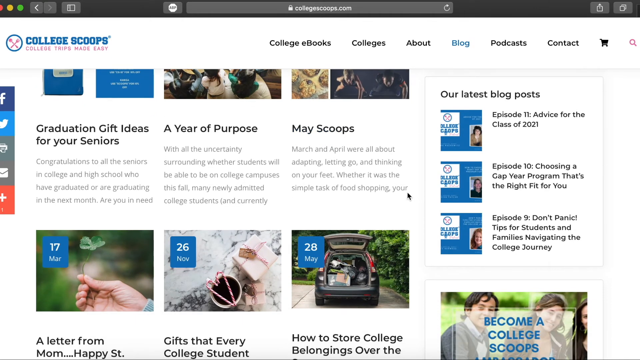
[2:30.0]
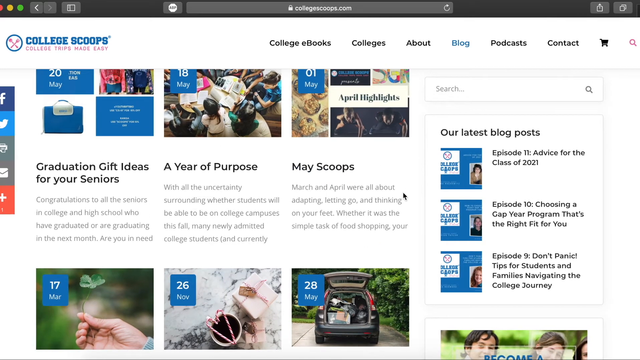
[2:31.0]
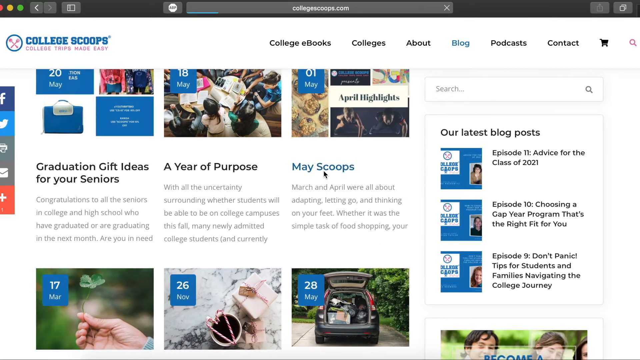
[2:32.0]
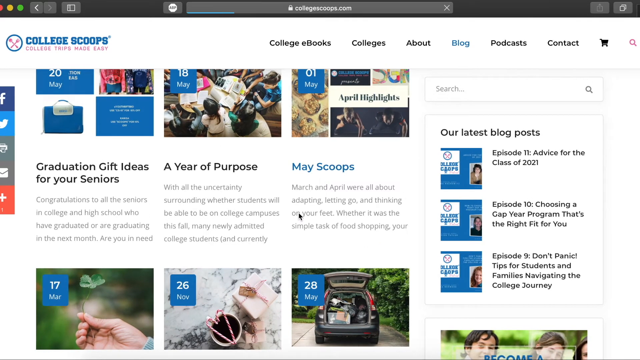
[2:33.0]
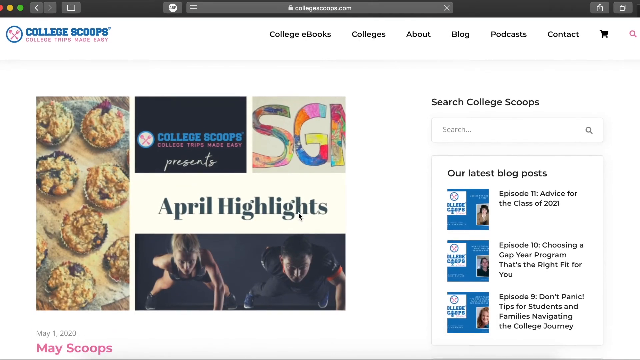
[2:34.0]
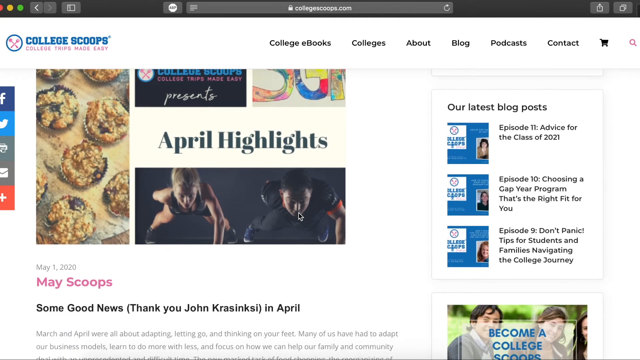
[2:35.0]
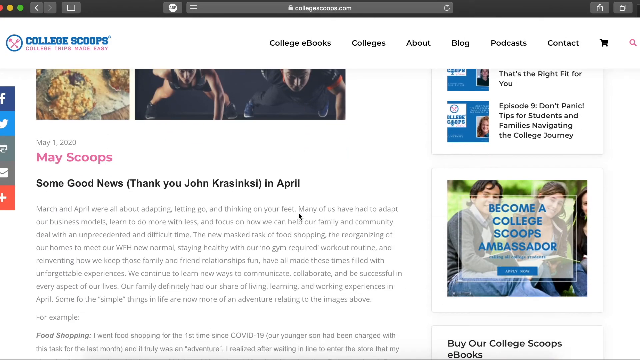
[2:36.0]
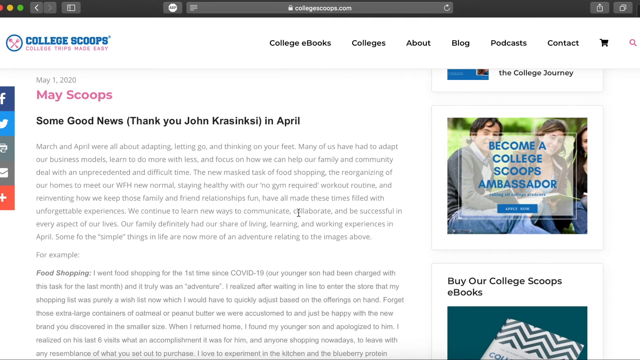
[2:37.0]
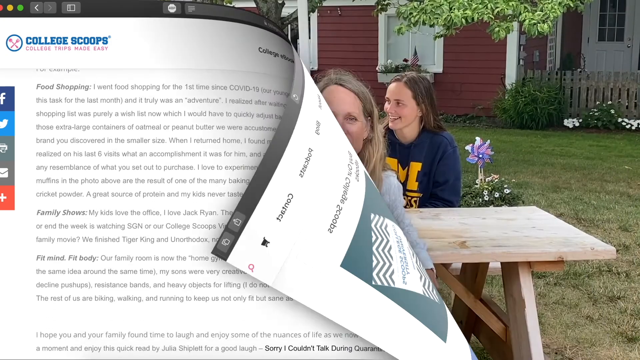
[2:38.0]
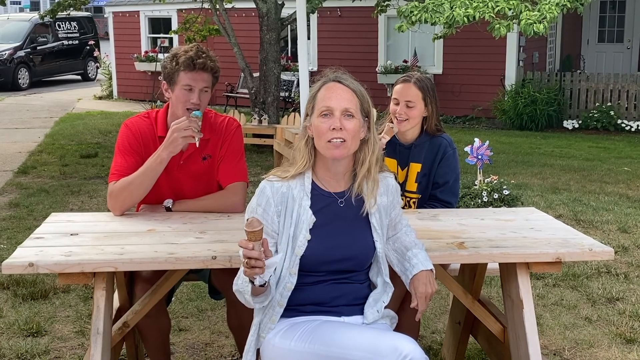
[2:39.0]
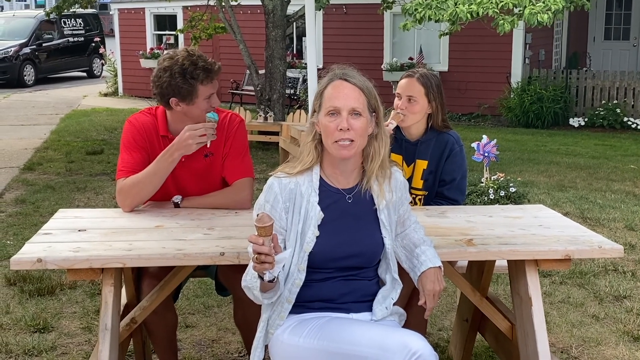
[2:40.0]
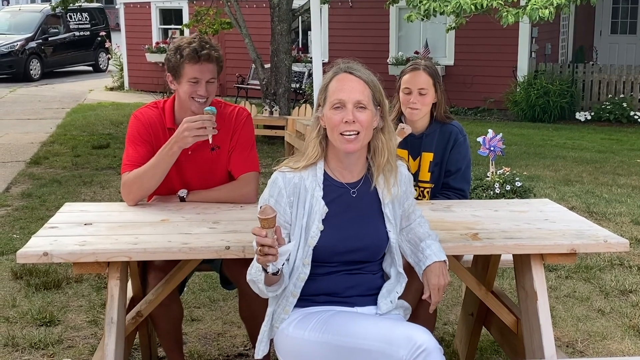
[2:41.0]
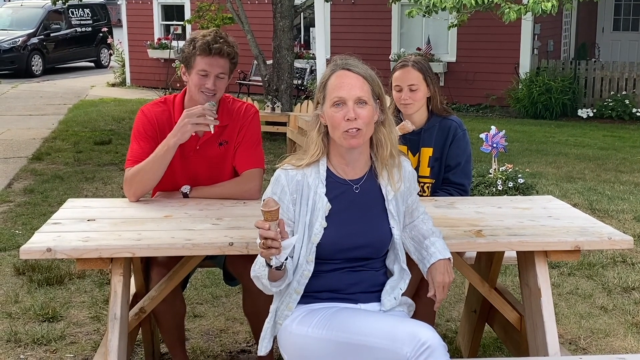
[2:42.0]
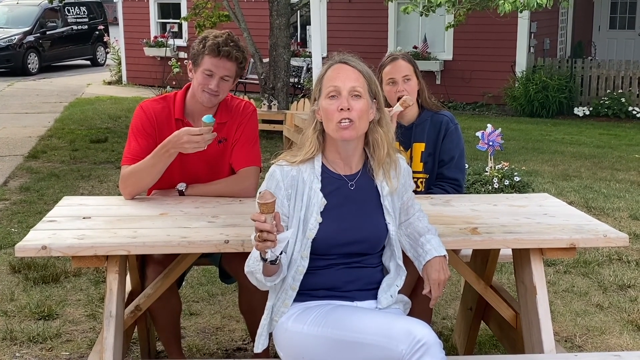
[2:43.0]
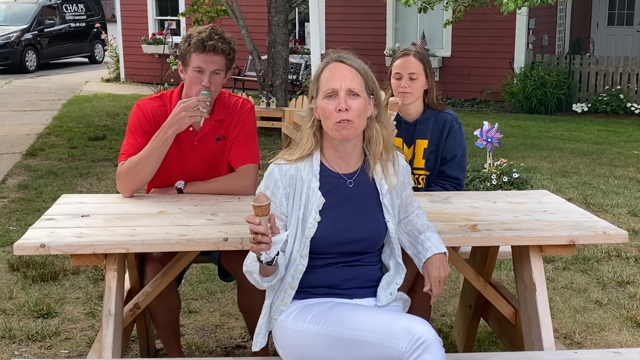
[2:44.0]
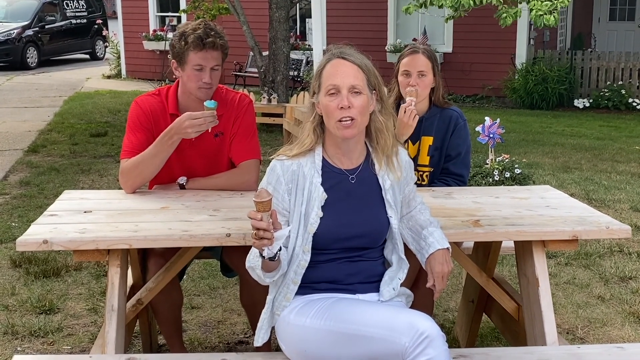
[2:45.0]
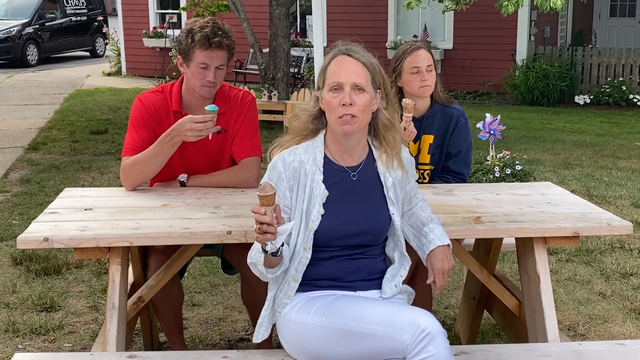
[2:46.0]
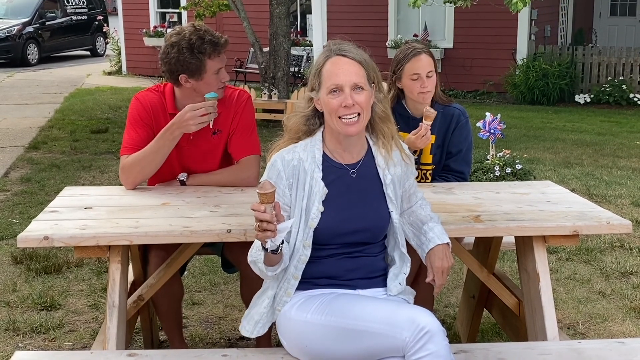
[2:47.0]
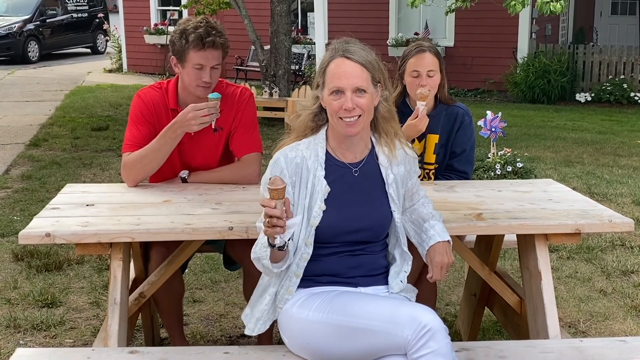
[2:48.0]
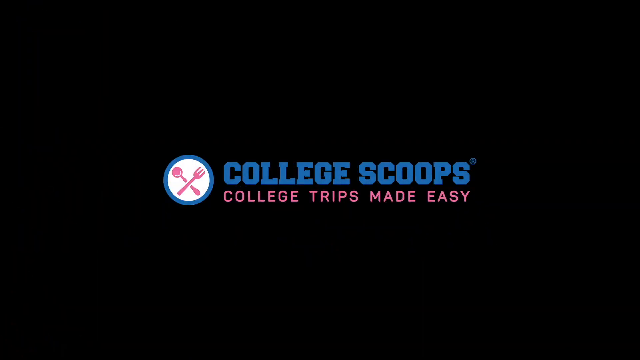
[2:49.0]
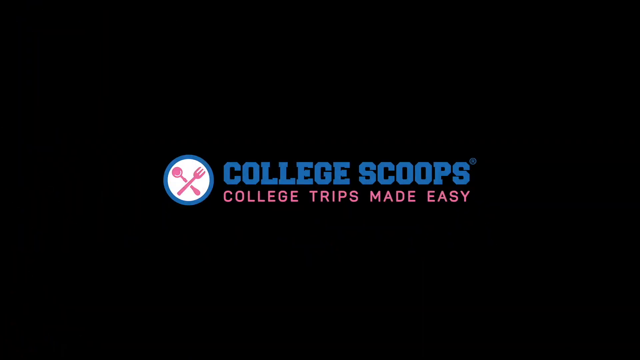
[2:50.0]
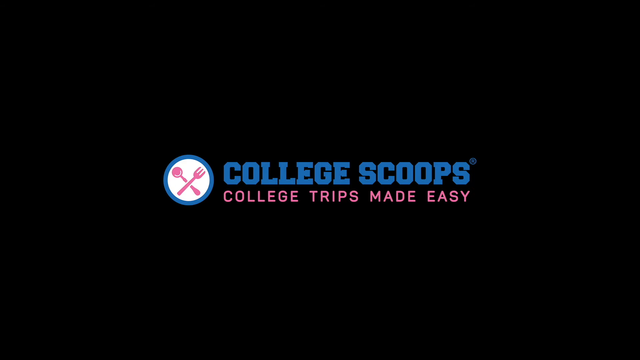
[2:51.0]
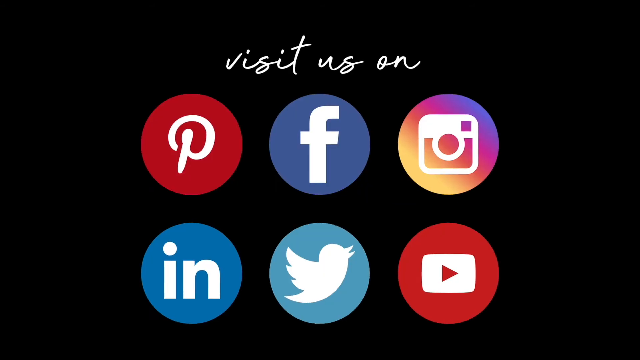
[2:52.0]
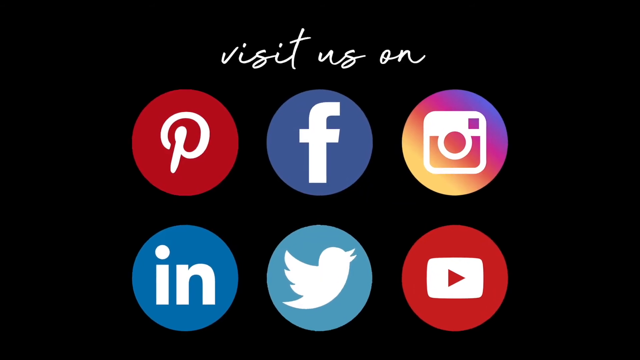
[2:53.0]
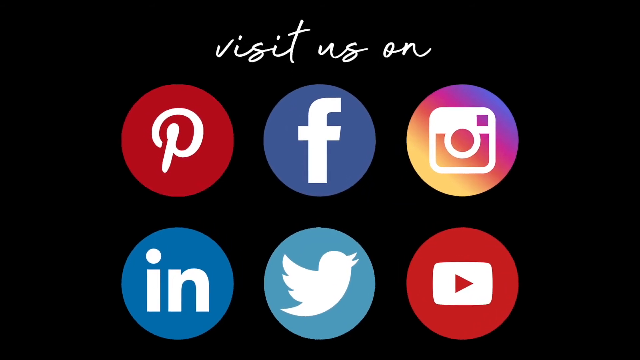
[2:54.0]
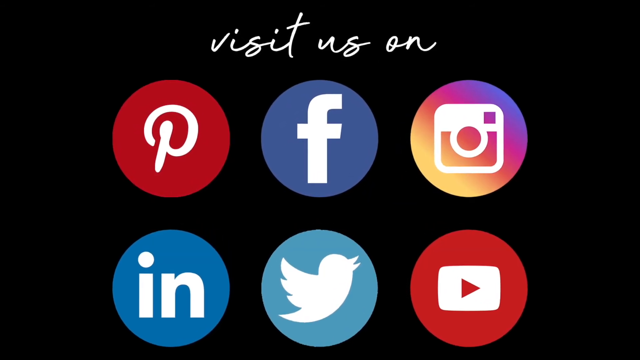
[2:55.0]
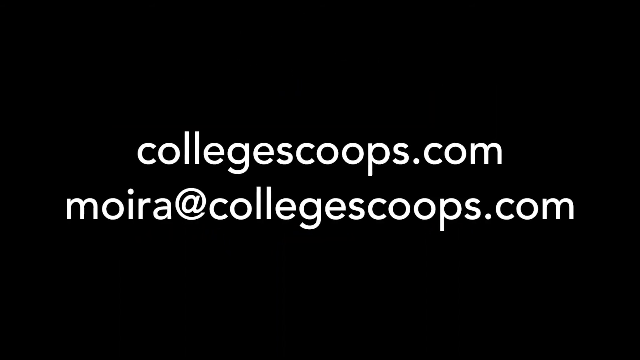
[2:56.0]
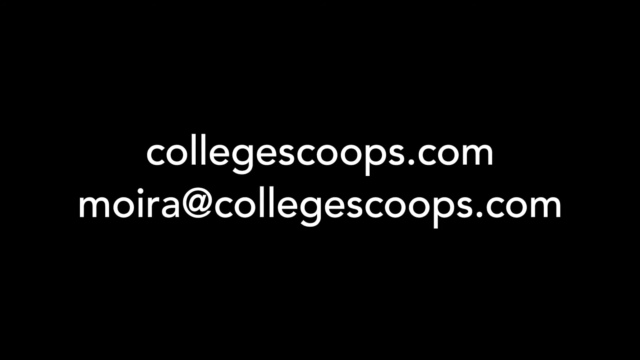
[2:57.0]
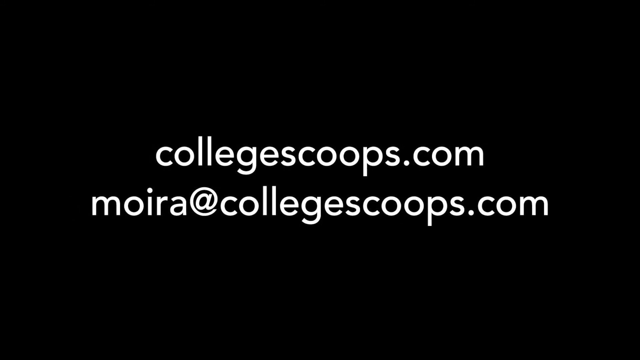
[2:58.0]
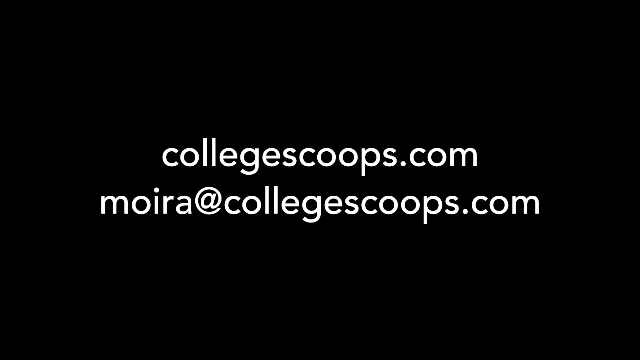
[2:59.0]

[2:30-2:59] Scrolling continues through the page, reaching a section called "April Highlights," which appears to highlight different articles. The video then cuts back to the woman from the beginning, sitting at a picnic bench and talking, holding a chocolate ice cream cone in her right hand. Two other people sit behind her on the other side of the bench: a guy on the left and a girl on the right. The girl also holds a chocolate ice cream cone in her right hand, while the guy holds some sort of ice blue ice cream cone in his right hand. Then the College Scoops logo appears, followed by the social media it is on: "visit us on Pinterest, Facebook, Instagram, LinkedIn, Twitter, and YouTube." After that, the website and email are shown.